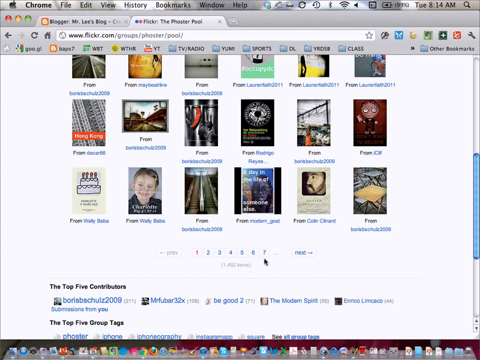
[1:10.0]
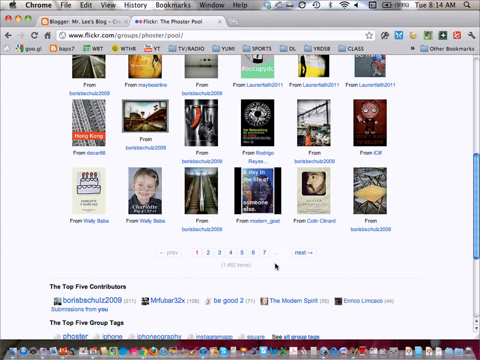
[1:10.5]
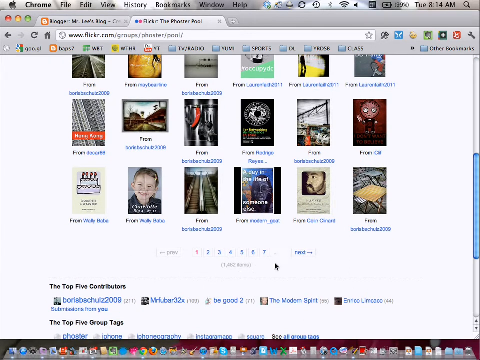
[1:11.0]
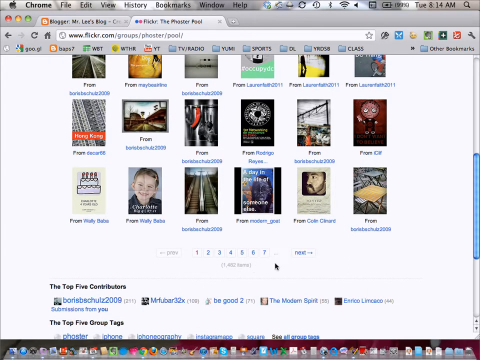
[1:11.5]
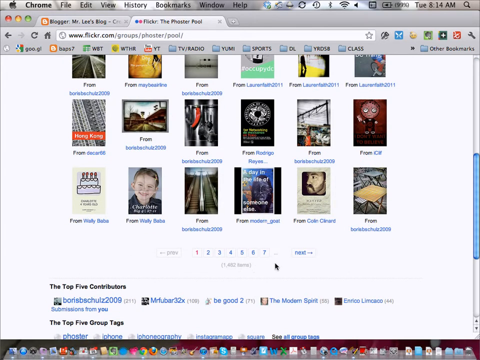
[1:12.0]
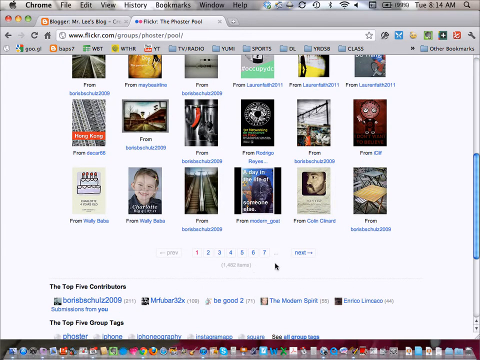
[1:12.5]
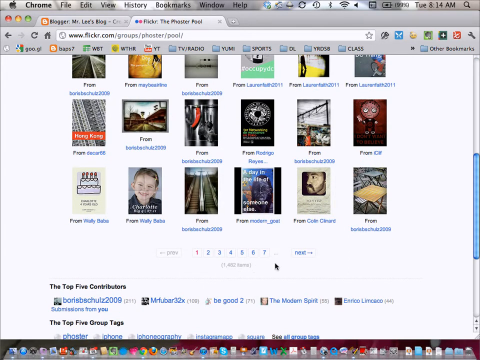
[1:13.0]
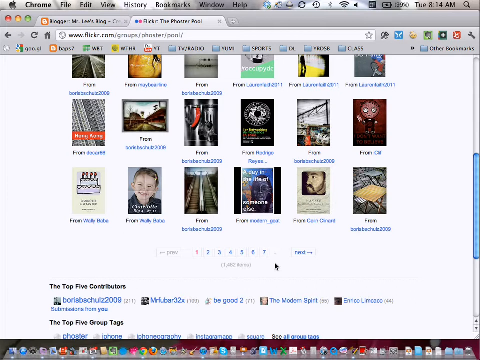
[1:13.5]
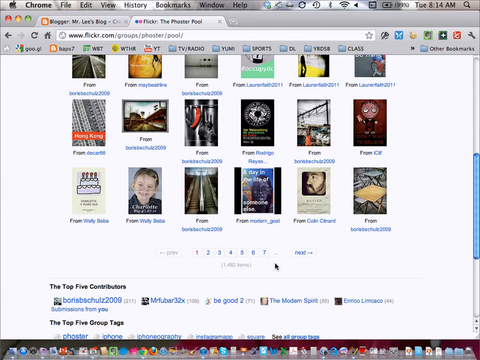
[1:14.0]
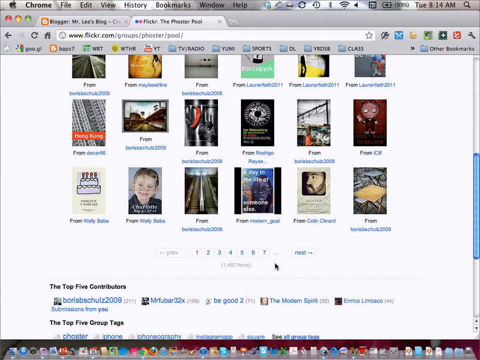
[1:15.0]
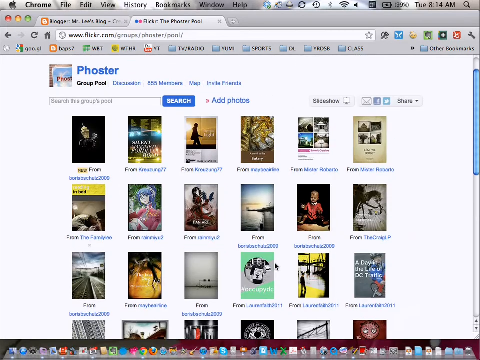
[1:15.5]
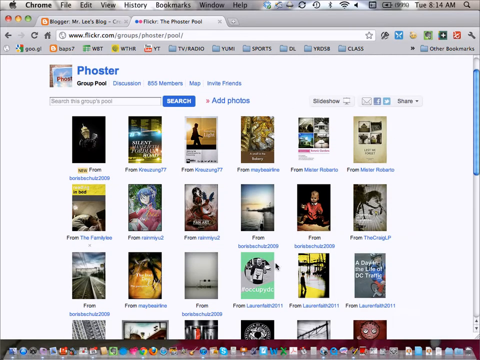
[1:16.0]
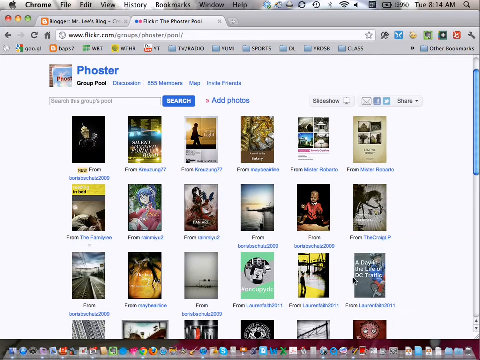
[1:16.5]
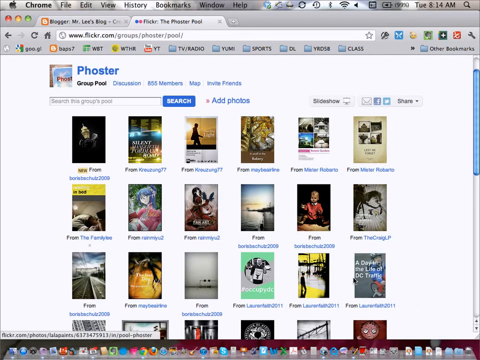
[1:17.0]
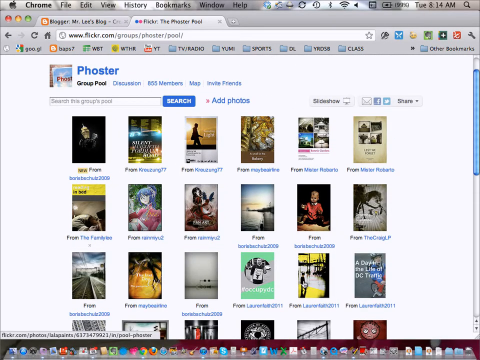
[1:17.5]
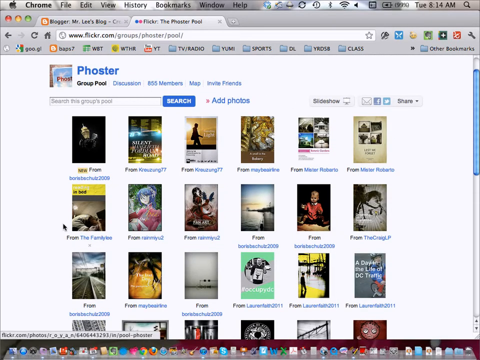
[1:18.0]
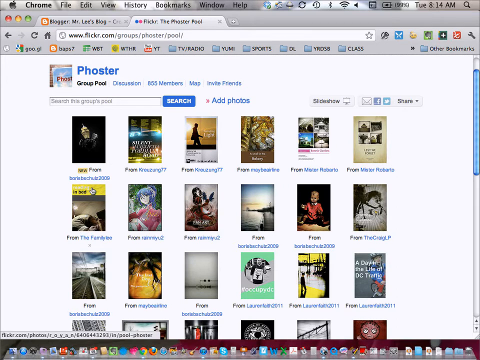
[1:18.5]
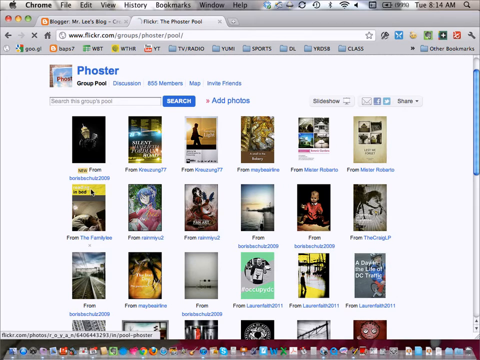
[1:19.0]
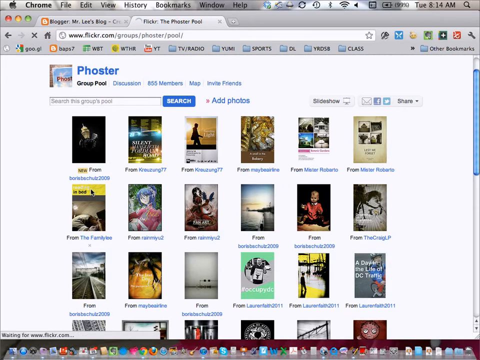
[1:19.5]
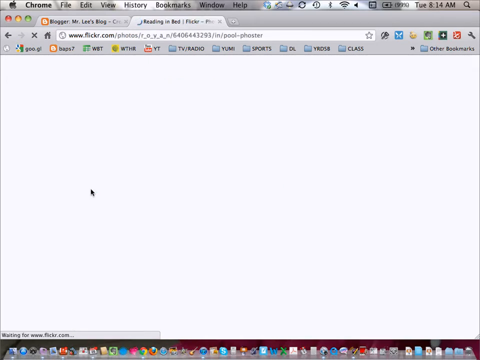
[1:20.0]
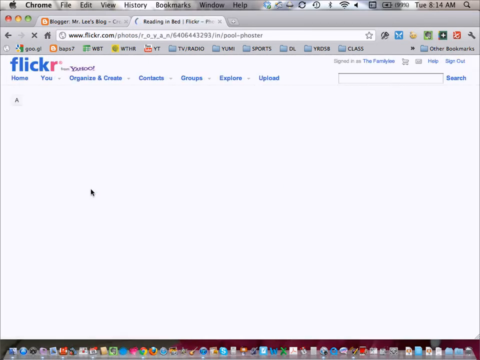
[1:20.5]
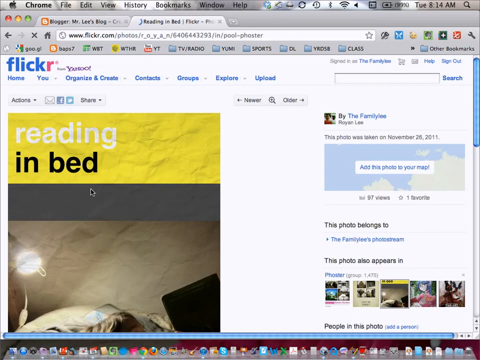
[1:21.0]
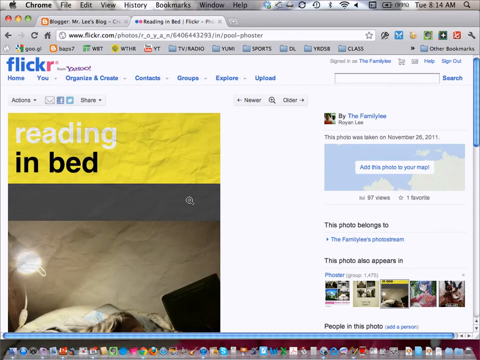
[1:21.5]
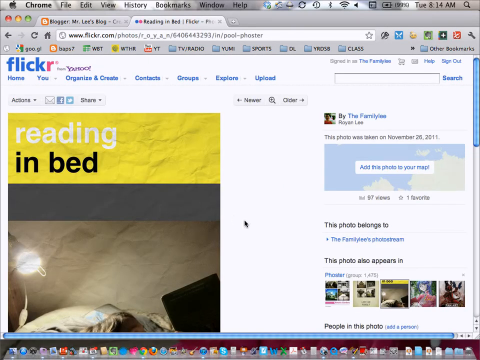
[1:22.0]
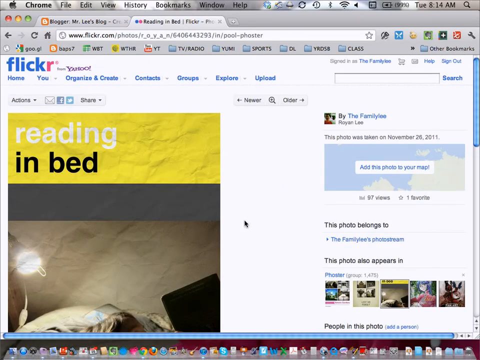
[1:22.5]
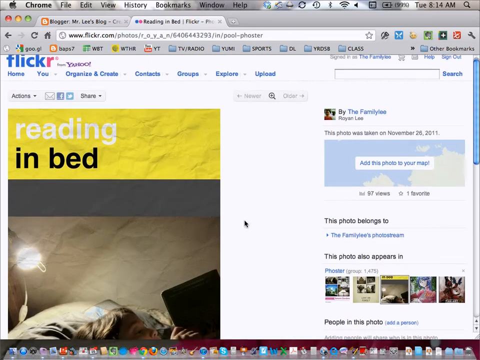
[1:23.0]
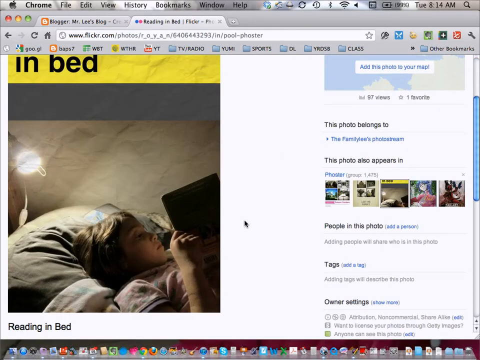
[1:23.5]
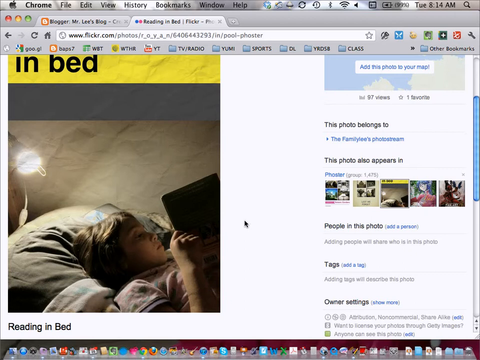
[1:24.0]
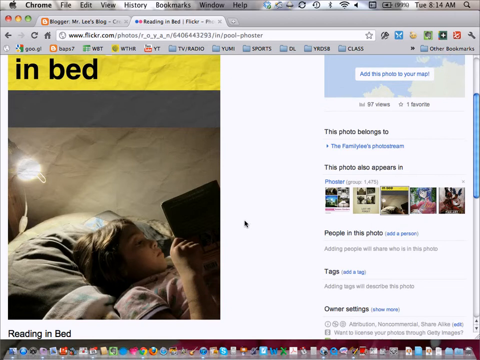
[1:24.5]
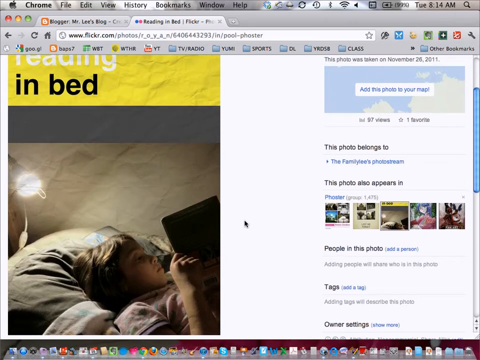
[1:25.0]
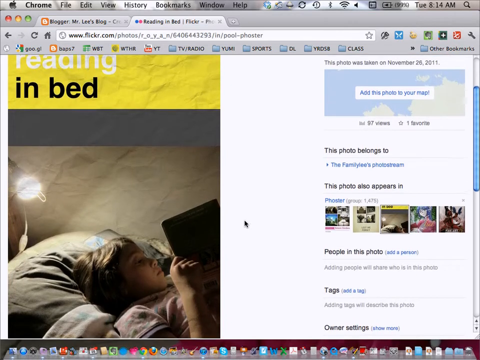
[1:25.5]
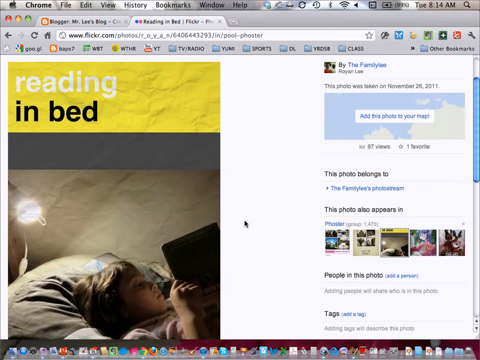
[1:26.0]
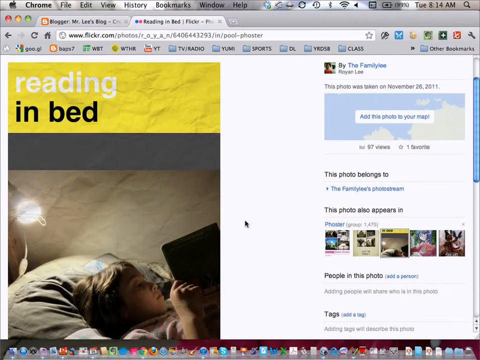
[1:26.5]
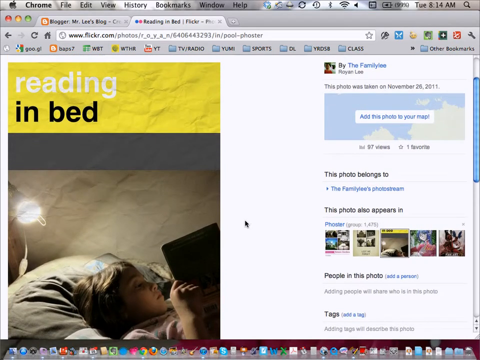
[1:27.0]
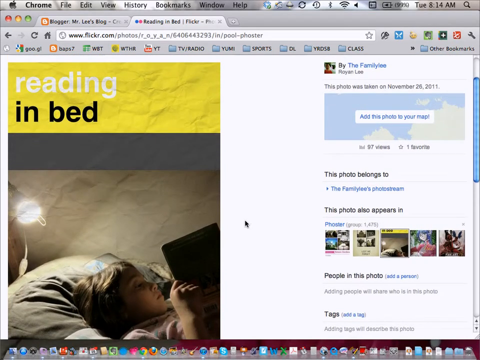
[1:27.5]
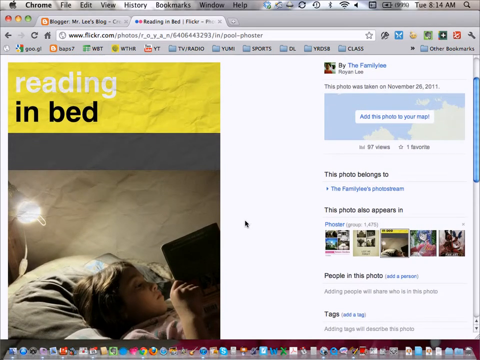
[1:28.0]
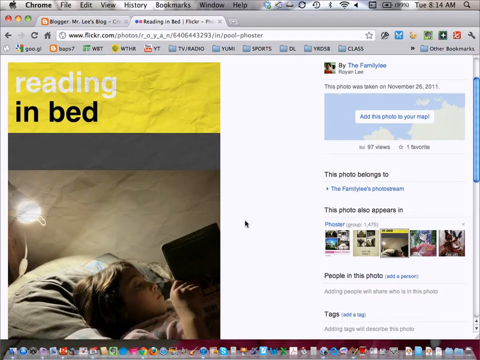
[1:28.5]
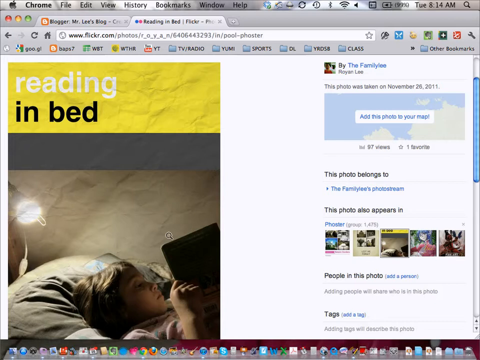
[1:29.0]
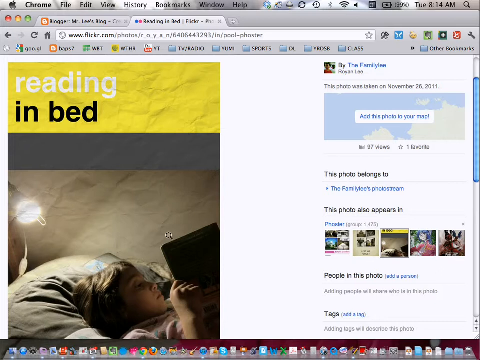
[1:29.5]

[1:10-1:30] The cursor is near the bottom of the Flickr page, which shows many different photos of posters. The user scrolls back up to the top, showing the first couple of pictures, and hovers over a picture in the second row from the top, counting from the left. Clicking it opens a full-screen view of the picture: the text "reading in bed" over a yellow background, and below it a rectangular portrait-orientation image of a small boy reading a book in bed with an overhead lamp to the left of his head. On the right-hand side of the page is a map widget with the text "add this photo to your map" in a white box, and above the map is the text "this photo was taken on November 26, 2011."